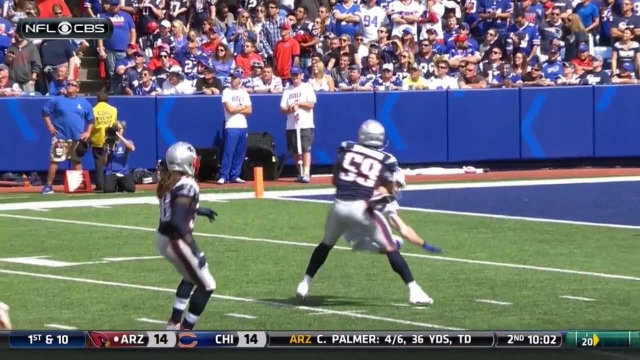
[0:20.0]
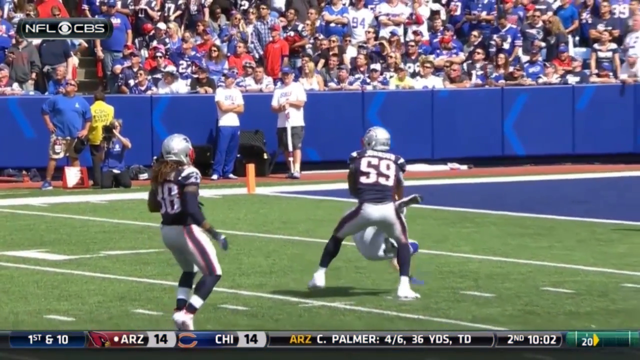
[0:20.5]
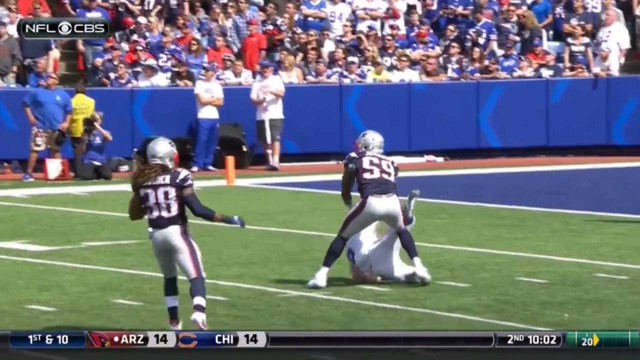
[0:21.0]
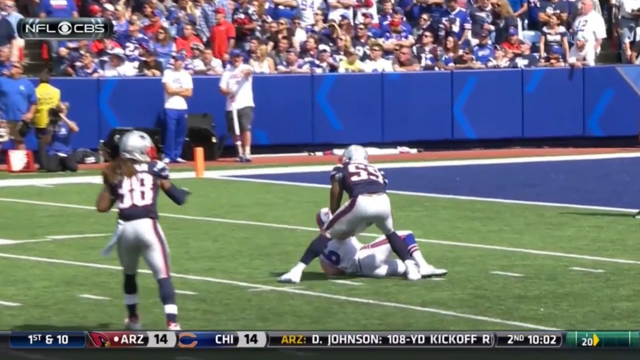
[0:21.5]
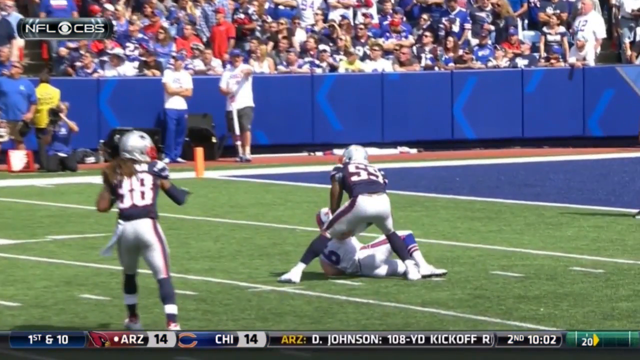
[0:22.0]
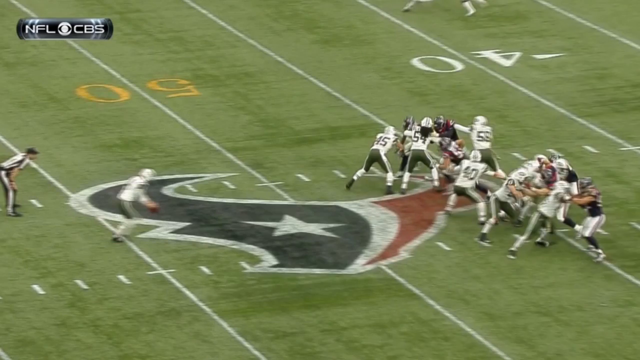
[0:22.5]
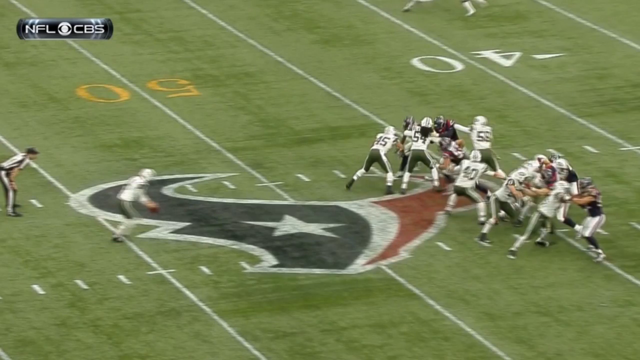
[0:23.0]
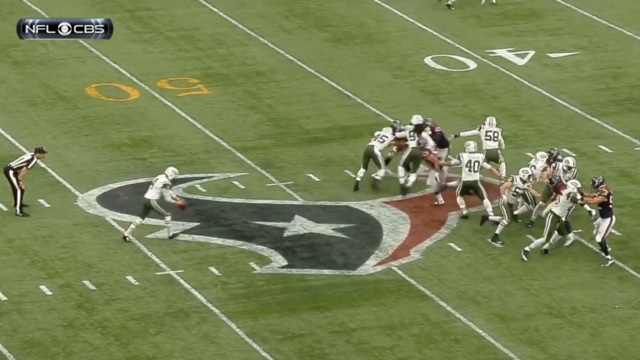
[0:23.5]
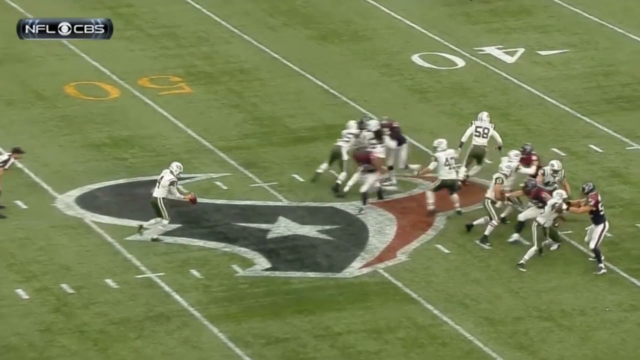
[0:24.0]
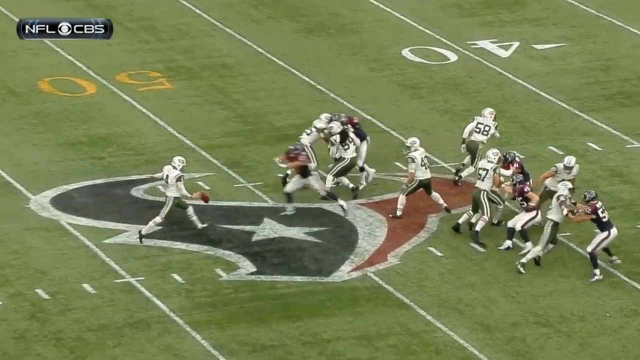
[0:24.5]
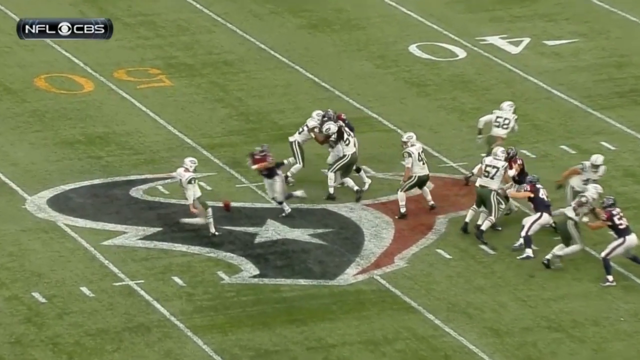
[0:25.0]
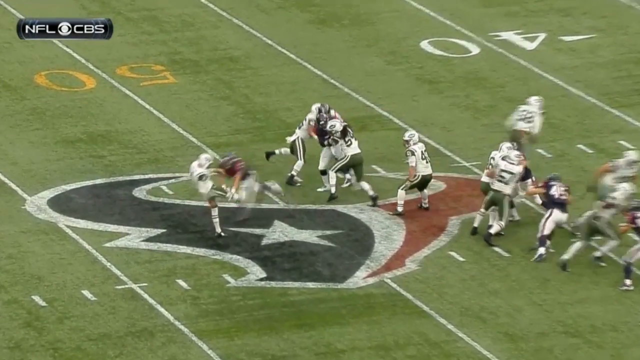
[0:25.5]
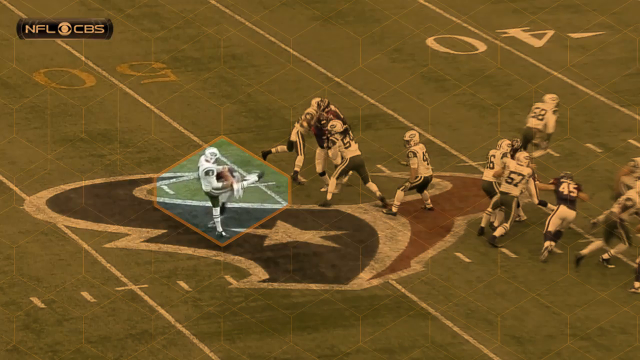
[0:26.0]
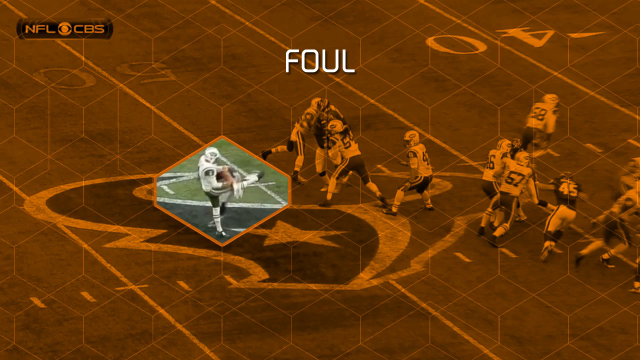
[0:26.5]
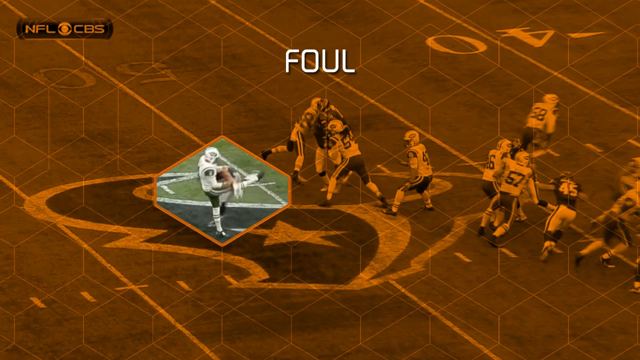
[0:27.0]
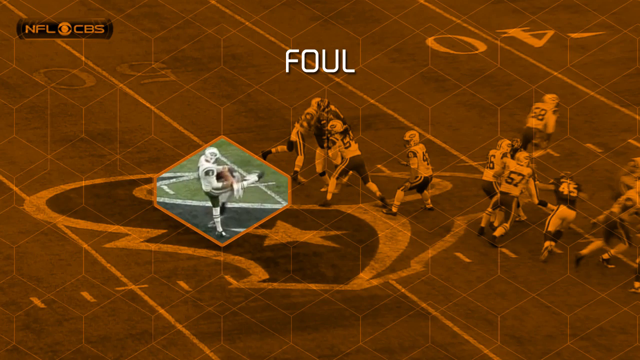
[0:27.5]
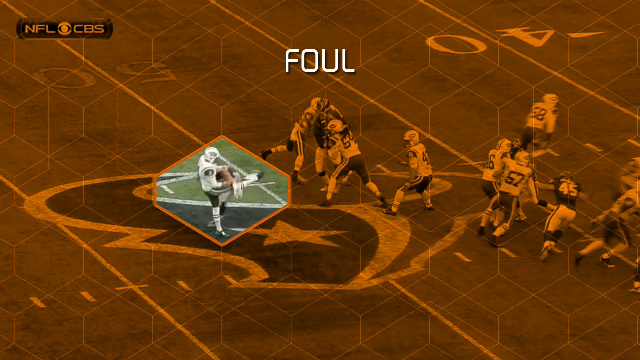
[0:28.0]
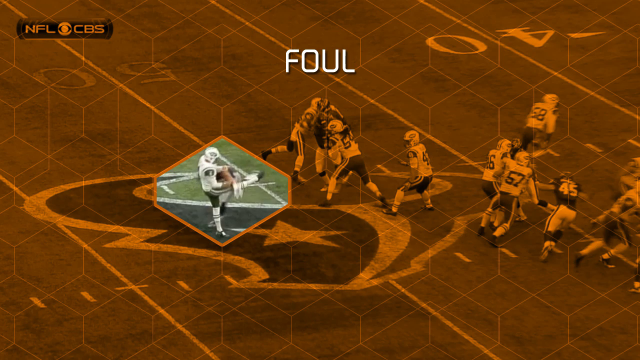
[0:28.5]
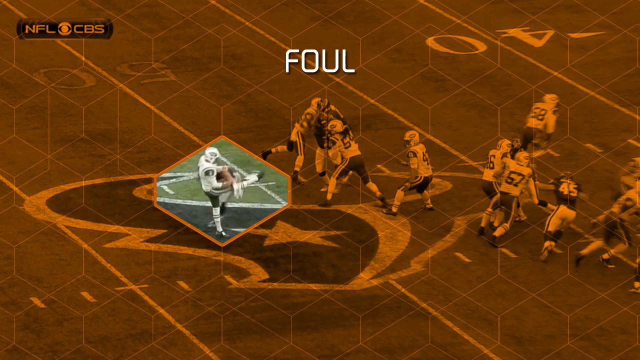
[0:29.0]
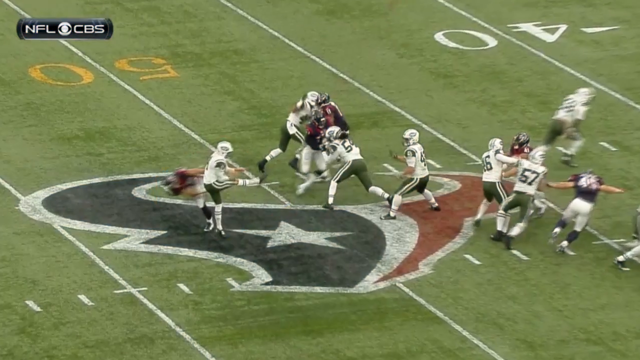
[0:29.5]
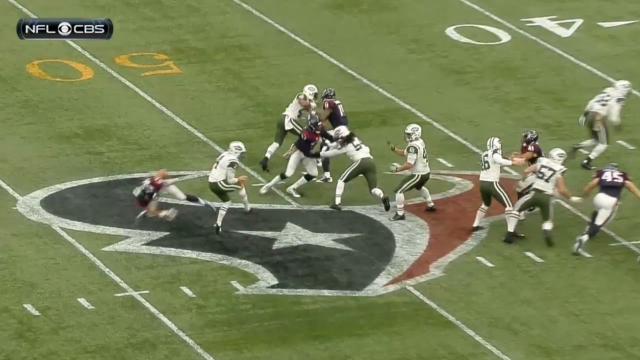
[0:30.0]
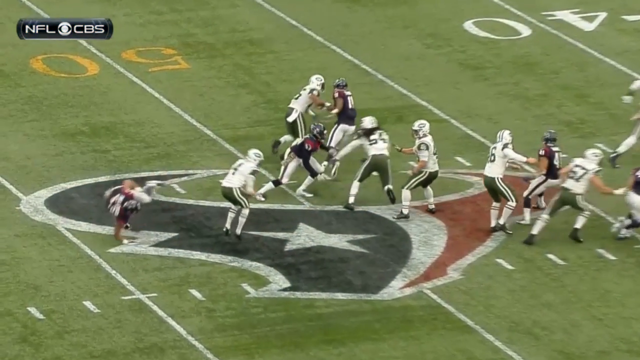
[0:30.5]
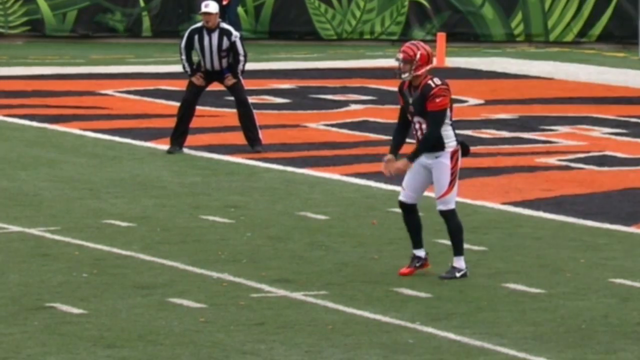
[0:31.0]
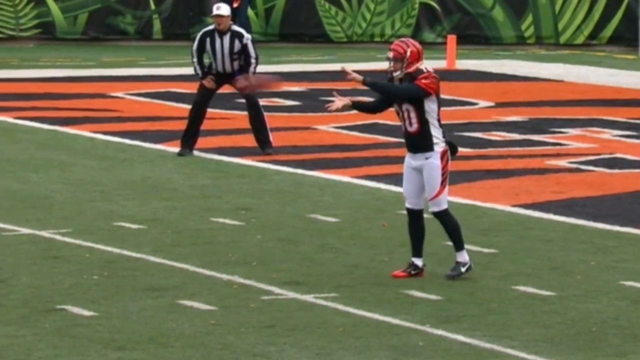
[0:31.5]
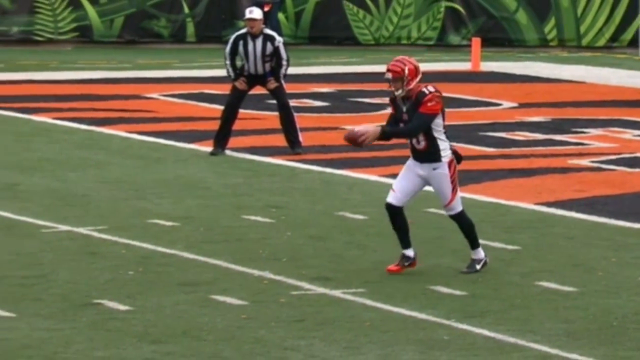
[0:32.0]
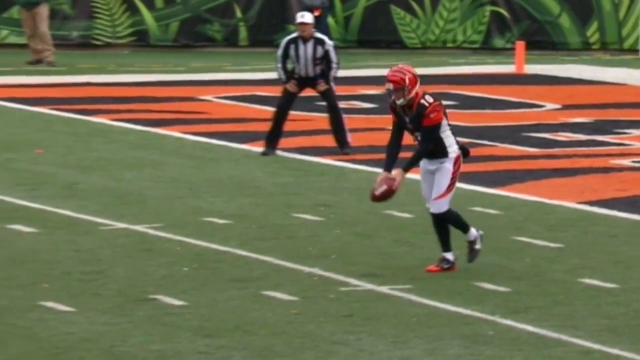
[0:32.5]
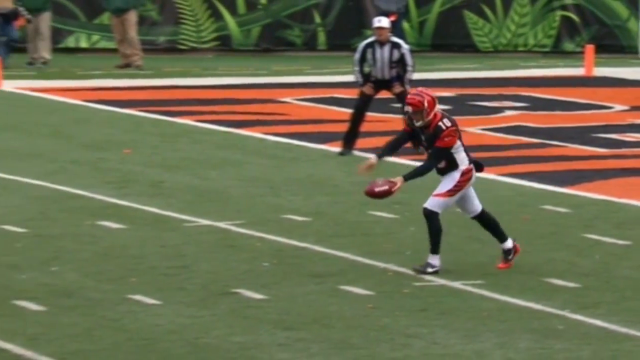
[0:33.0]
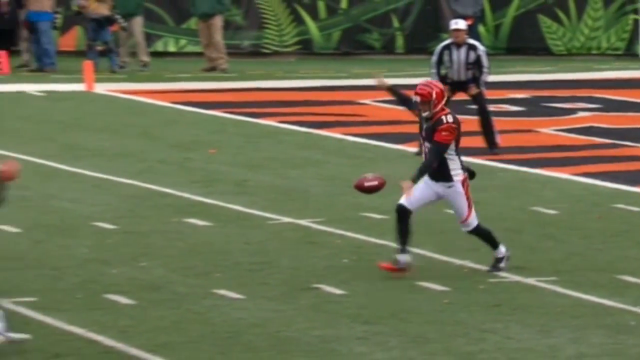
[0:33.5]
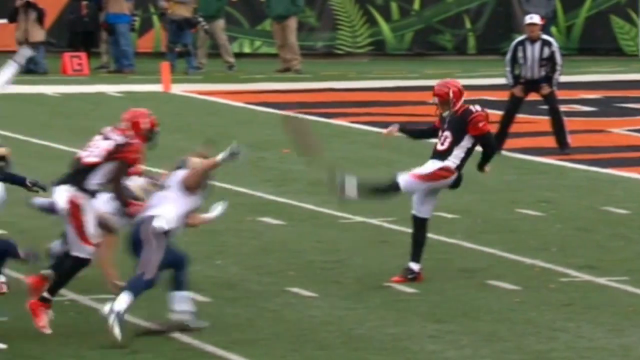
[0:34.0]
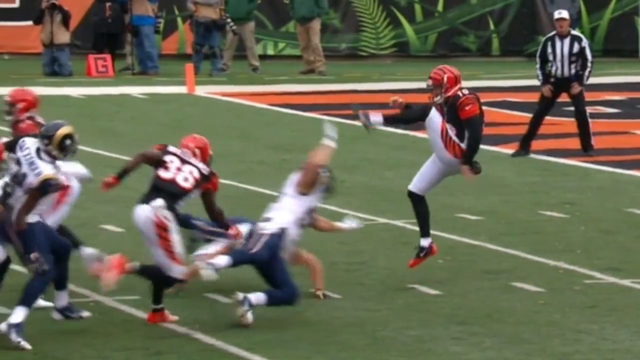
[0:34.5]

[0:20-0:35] The Patriots player kind of shoves the Bills player down, and that play ends. The video then pans to another play, the Jets versus the Texans. The Jets punter has the ball at his own 45-yard line, standing kind of on the Houston logo. Everybody is blocking as he holds the ball, and he kicks it. A Texans player comes through and hits him, and a diamond highlights the moment of contact. The entire screen turns orange and says "foul" in white text. The play kind of continues and the player falls down. The video then pans to a Bengals play: the Bengals punter receives the ball at about his own four-yard line, takes two steps, kicks it, and ends up in the split position again. A player coming at him looks like he is right about to hit him before the play cuts off.